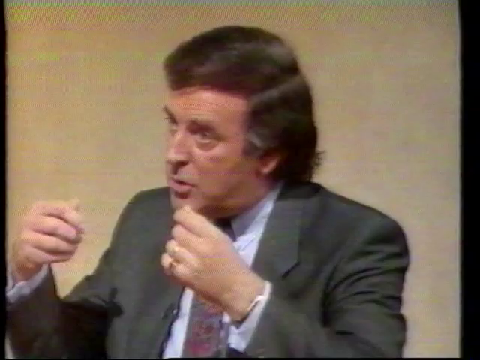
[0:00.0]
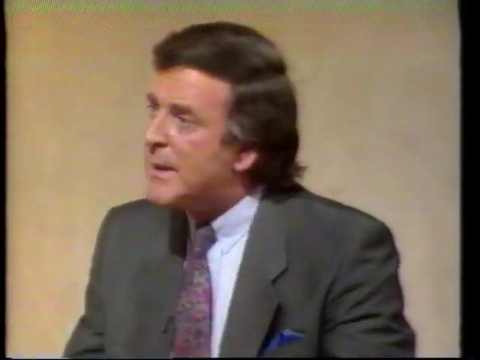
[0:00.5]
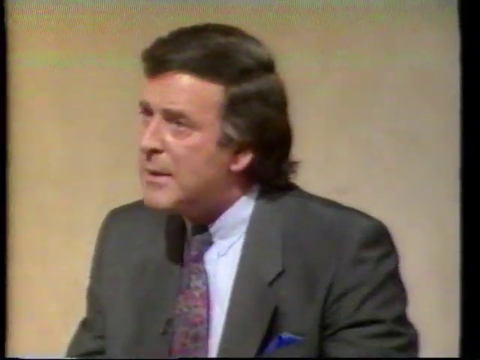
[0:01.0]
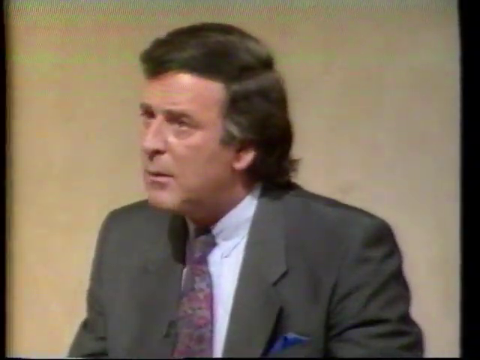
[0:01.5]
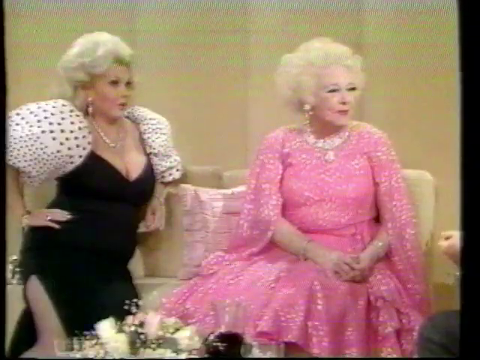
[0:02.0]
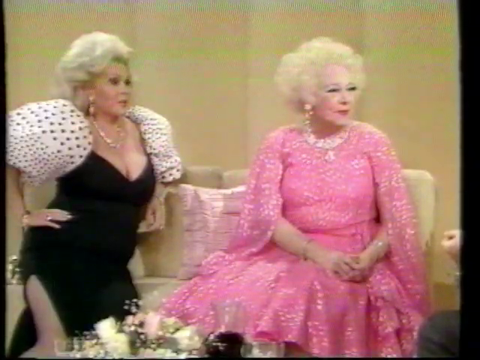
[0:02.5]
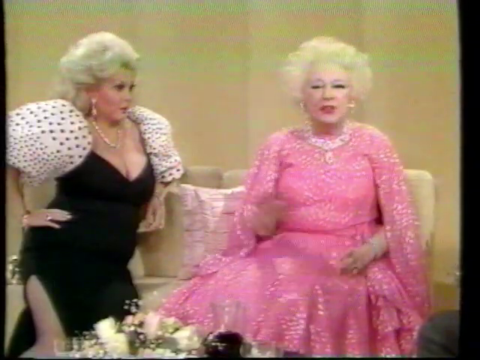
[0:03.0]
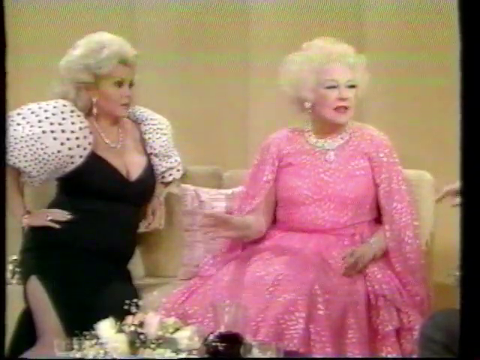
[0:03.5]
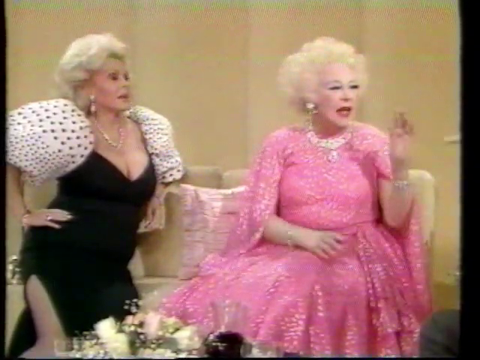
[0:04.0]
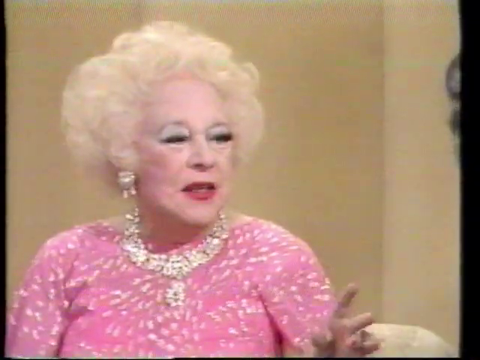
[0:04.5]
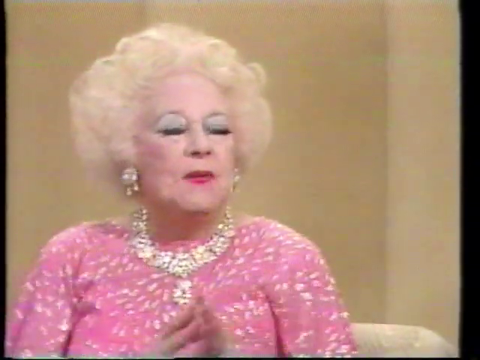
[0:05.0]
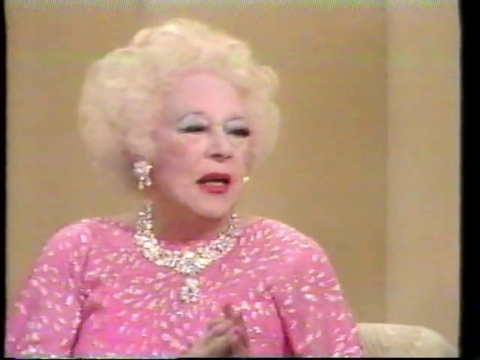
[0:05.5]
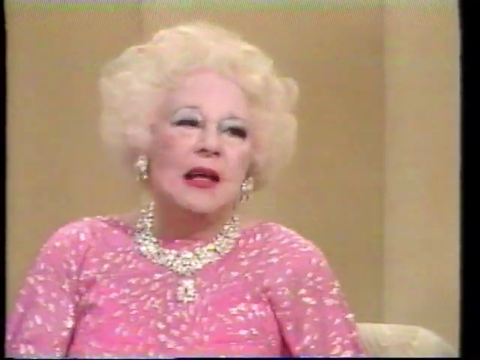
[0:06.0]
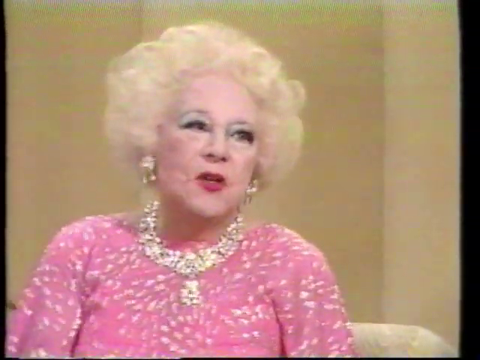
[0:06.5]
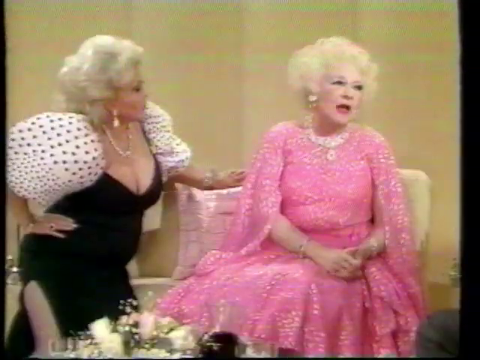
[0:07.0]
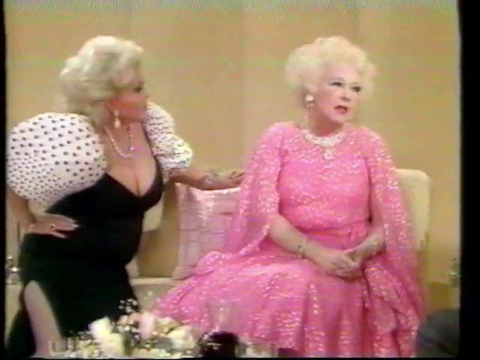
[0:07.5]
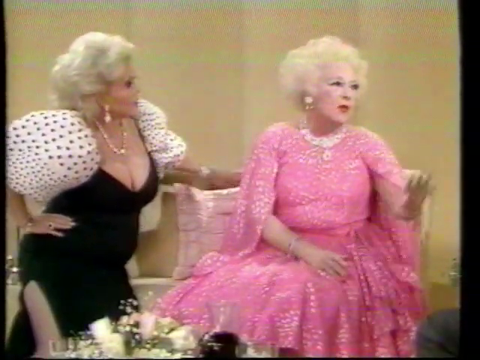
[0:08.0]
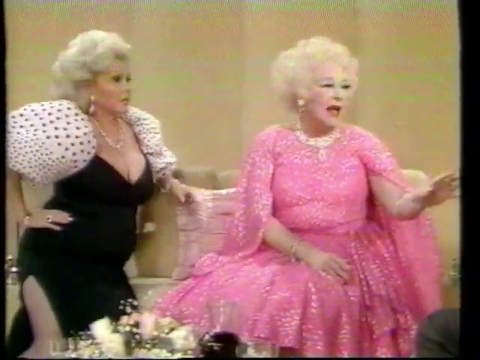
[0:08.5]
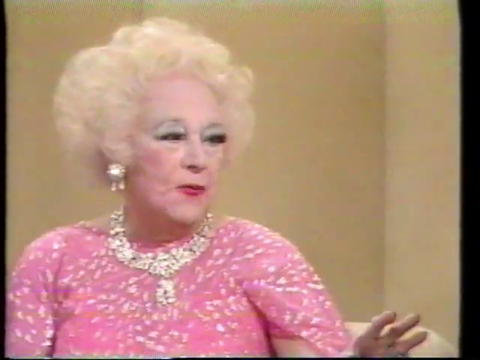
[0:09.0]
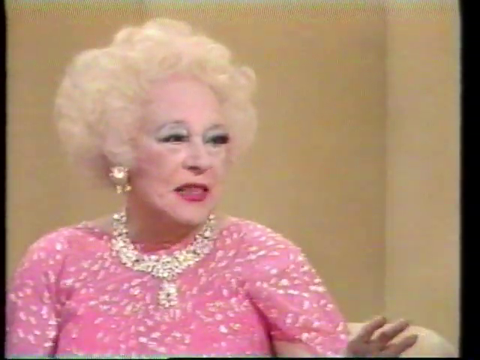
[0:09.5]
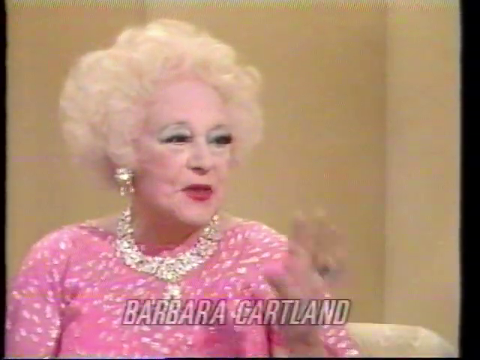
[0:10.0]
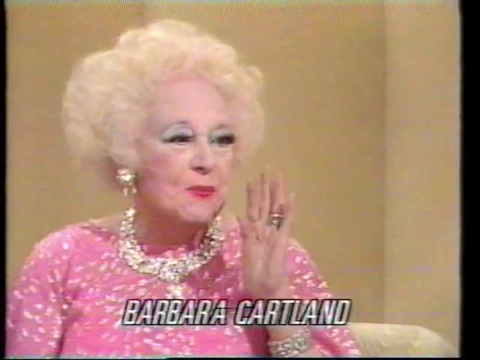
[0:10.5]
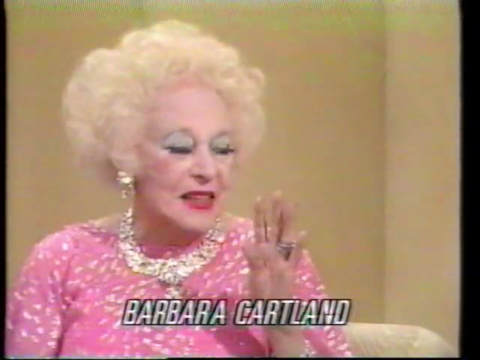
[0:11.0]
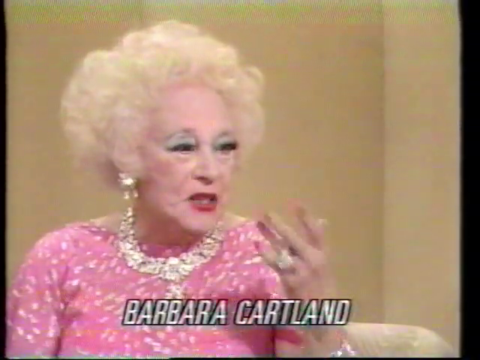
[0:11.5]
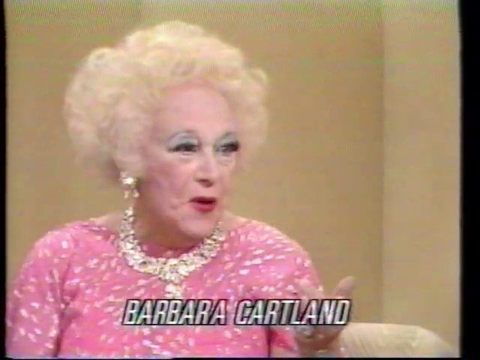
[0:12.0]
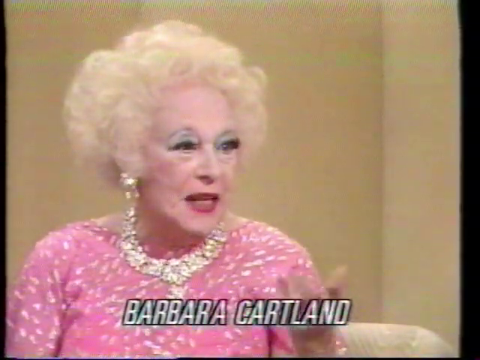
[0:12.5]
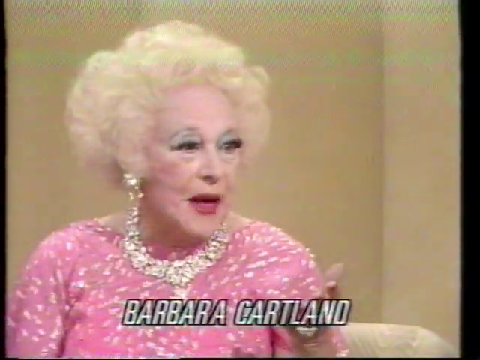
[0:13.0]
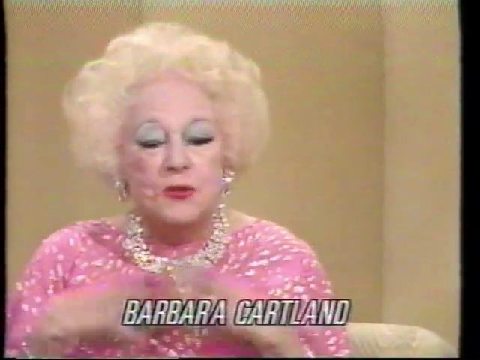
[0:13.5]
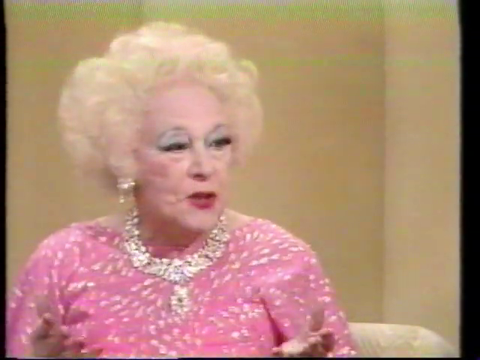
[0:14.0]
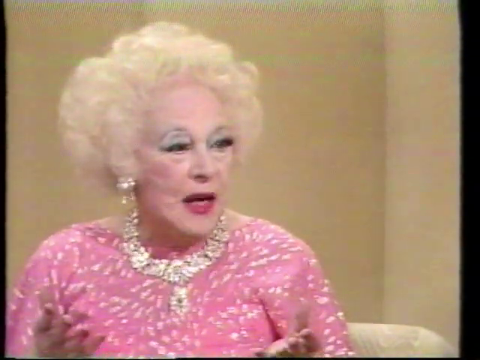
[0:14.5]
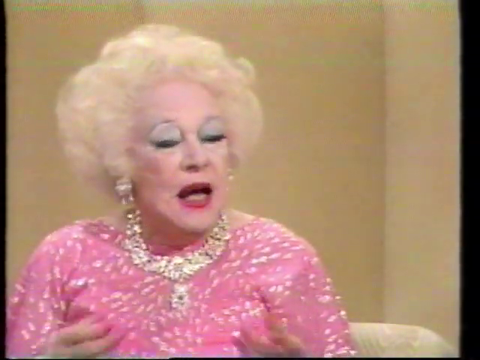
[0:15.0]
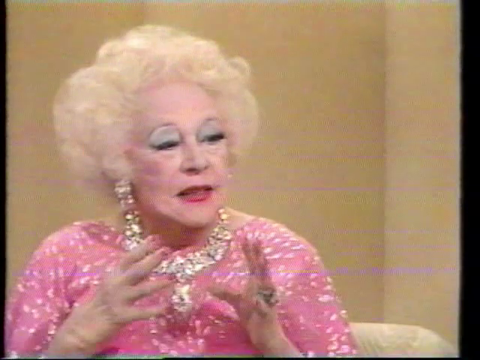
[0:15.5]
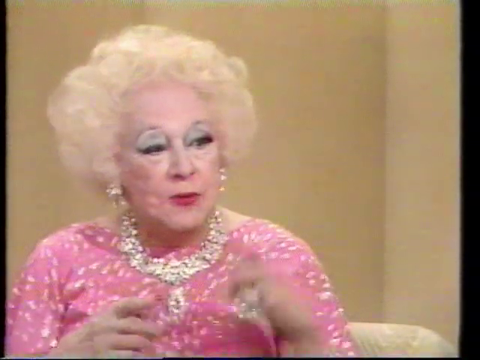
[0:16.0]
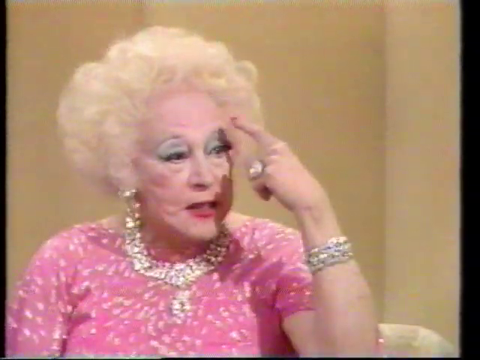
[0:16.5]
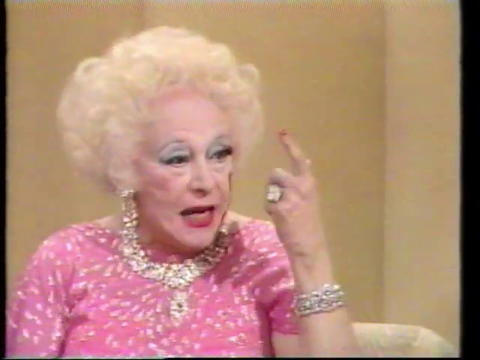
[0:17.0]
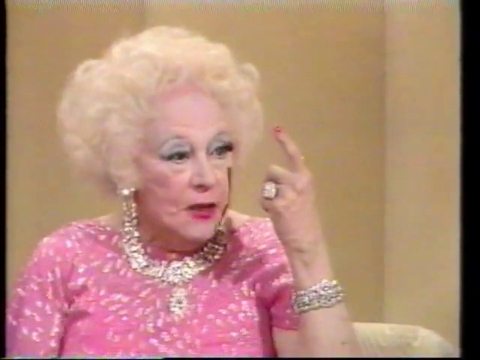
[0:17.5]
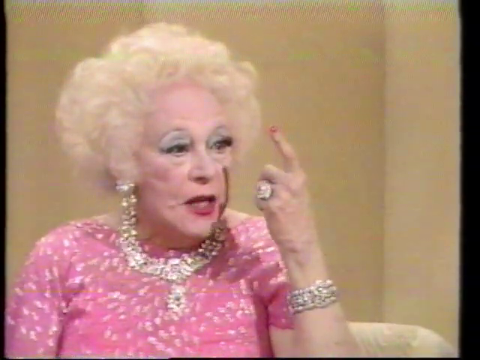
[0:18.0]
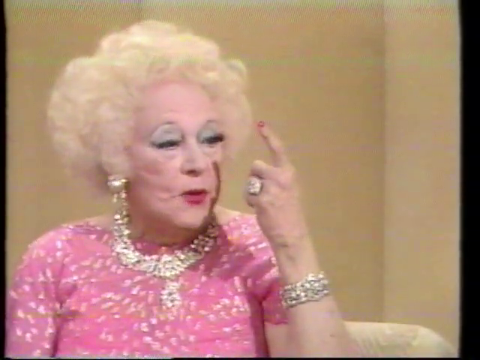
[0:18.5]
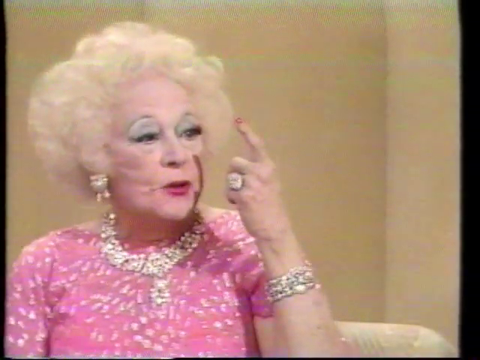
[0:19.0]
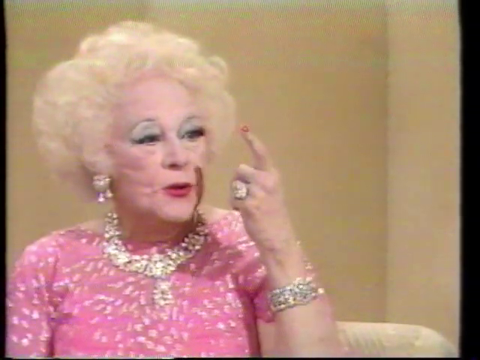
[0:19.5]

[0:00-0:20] A middle-aged man in a grey suit with slicked, long hair speaks to the camera. Older women with blonde hair, in puffy dresses and garments, sit on a sofa, one in black on the left and one in pink on the right. They speak, gesturing with their left and right hands, and wear a lot of very big diamond jewellery. They have red lips and makeup on. In a close-up view, the text "BARBARA CARTLAND" appears. She continues to speak, gesturing with both hands while wearing a lot of diamond jewellery. Her hair is long, puffy and blonde, and she has red nails as she points her left index finger towards her left eyebrow, just below her forehead. She wears a very large diamond ring on her ring finger and a very large diamond bracelet on her left wrist. She keeps speaking, gesturing with her left index finger in a twirling motion.